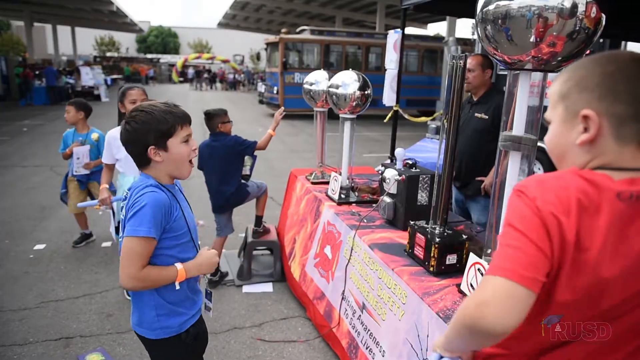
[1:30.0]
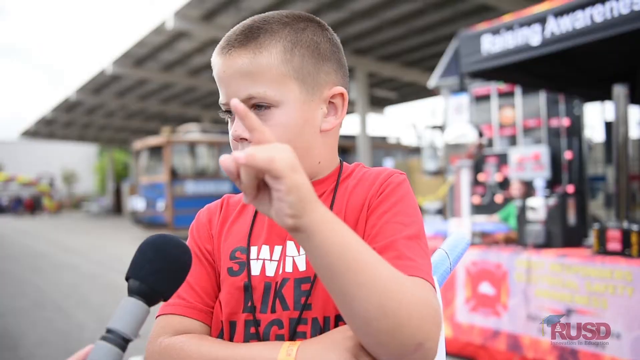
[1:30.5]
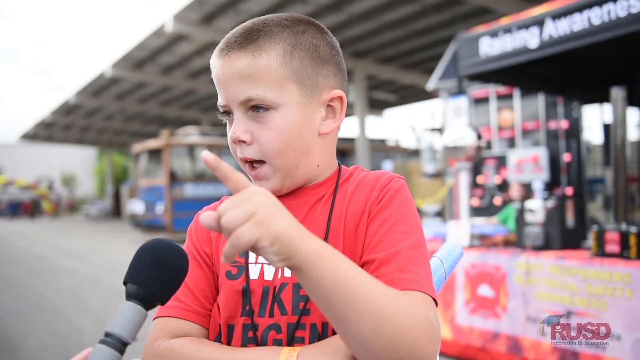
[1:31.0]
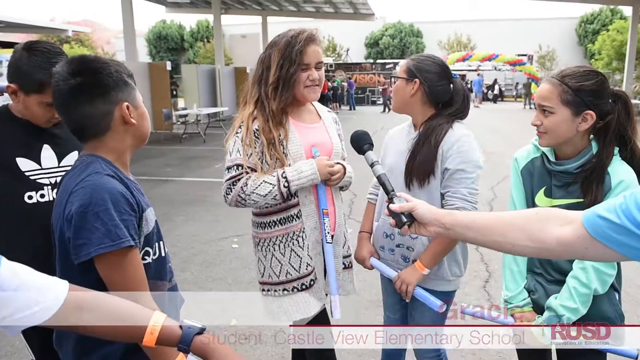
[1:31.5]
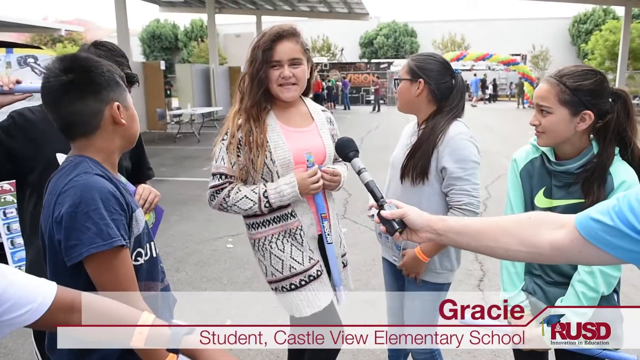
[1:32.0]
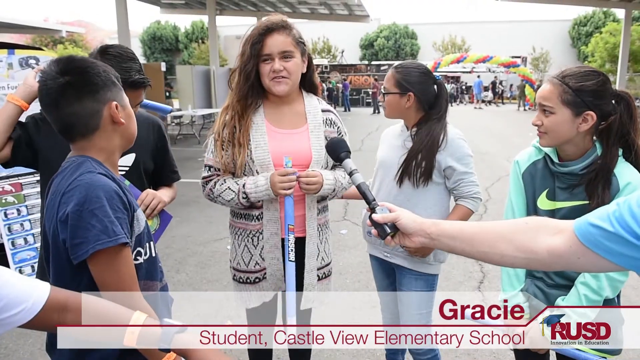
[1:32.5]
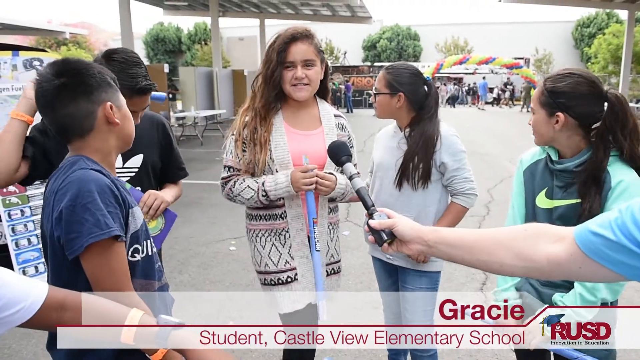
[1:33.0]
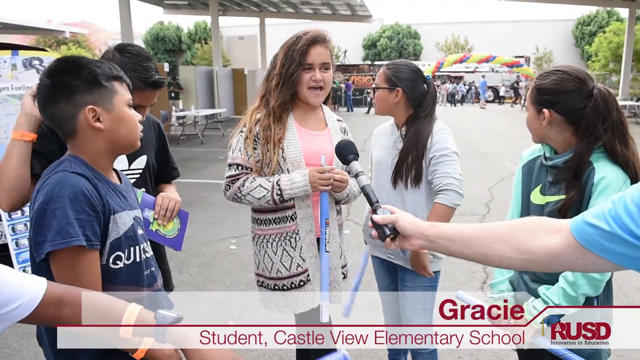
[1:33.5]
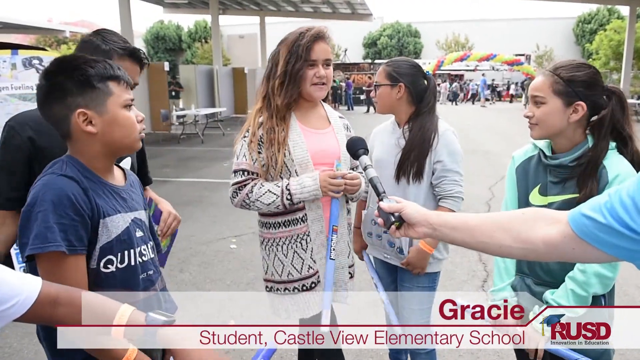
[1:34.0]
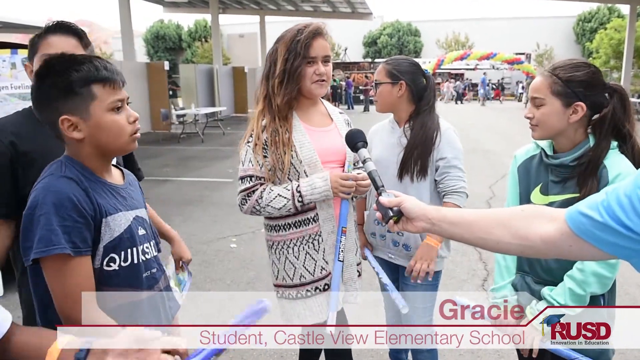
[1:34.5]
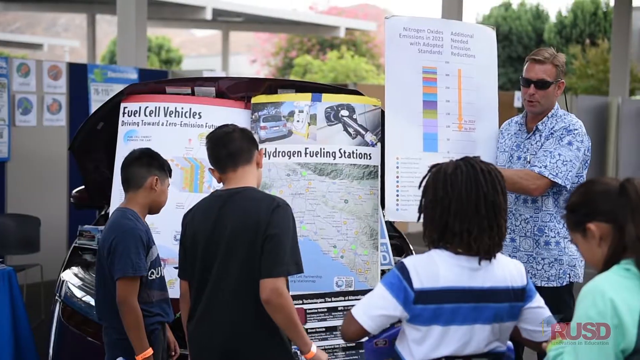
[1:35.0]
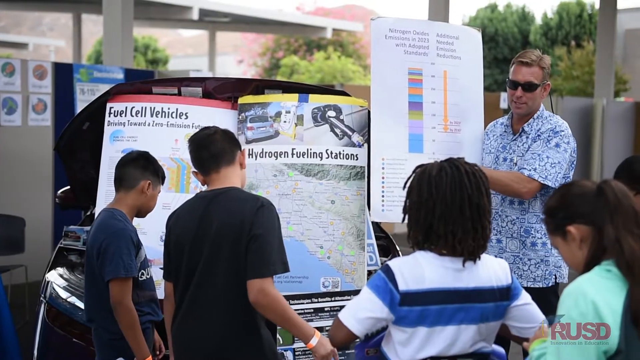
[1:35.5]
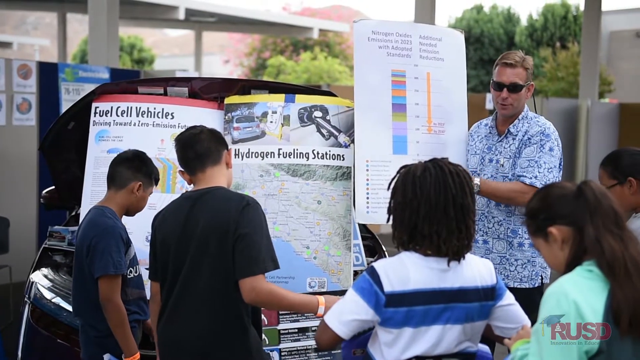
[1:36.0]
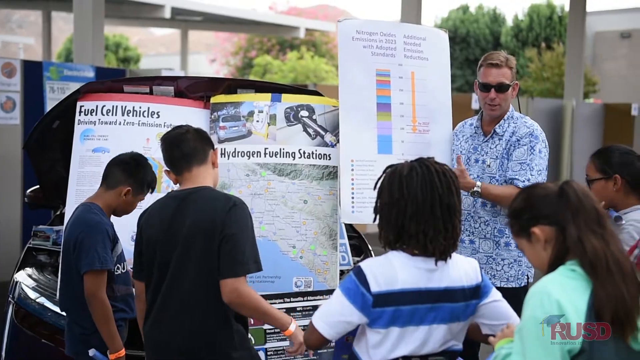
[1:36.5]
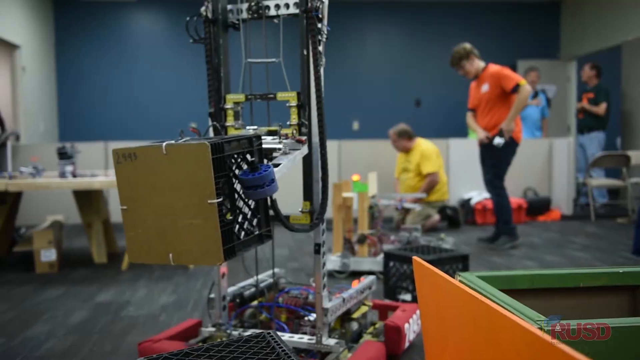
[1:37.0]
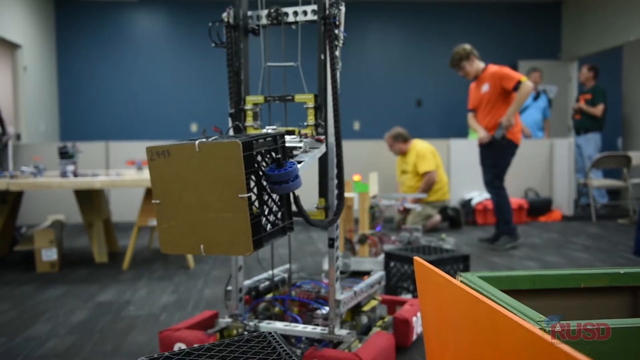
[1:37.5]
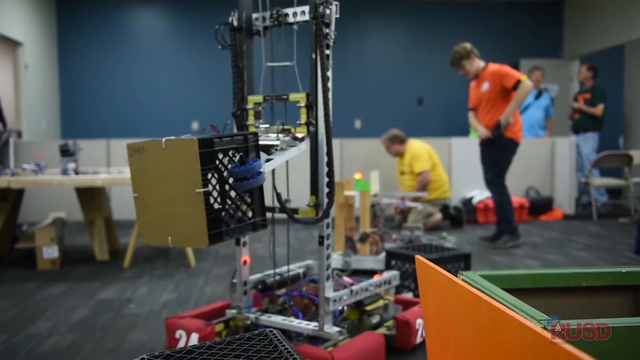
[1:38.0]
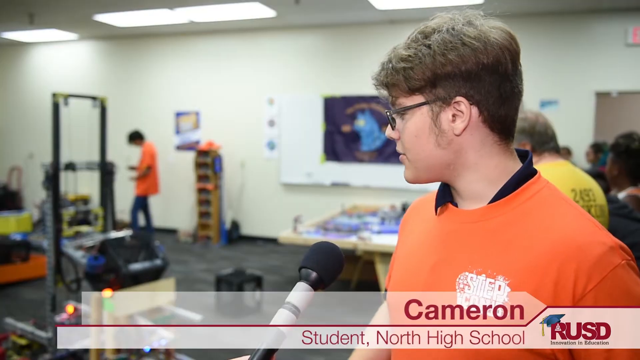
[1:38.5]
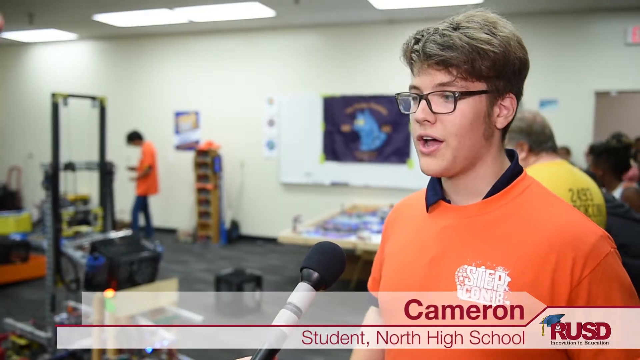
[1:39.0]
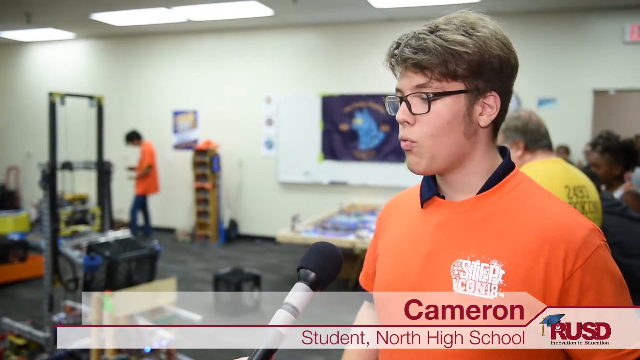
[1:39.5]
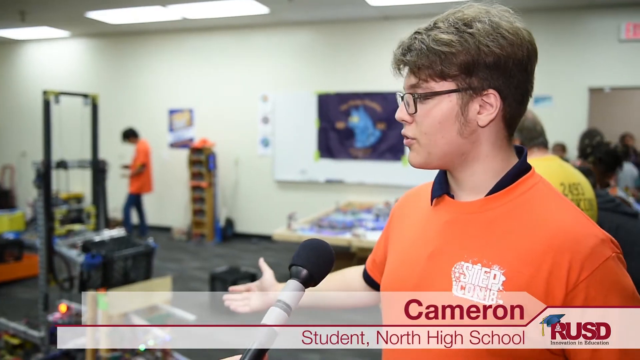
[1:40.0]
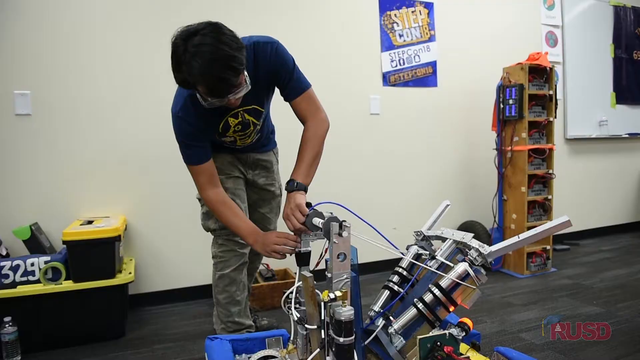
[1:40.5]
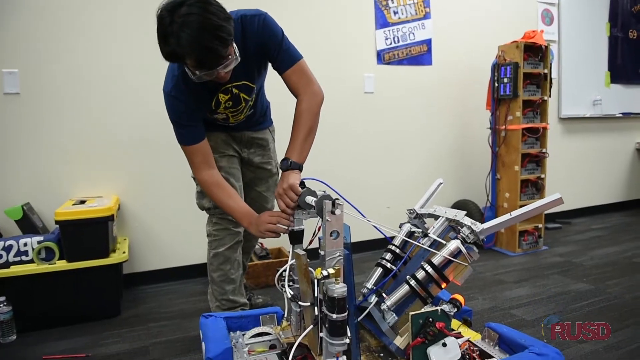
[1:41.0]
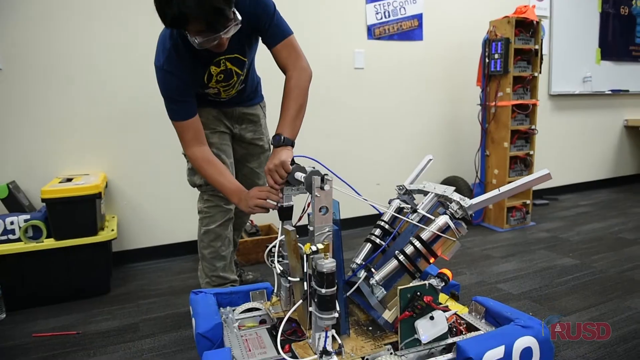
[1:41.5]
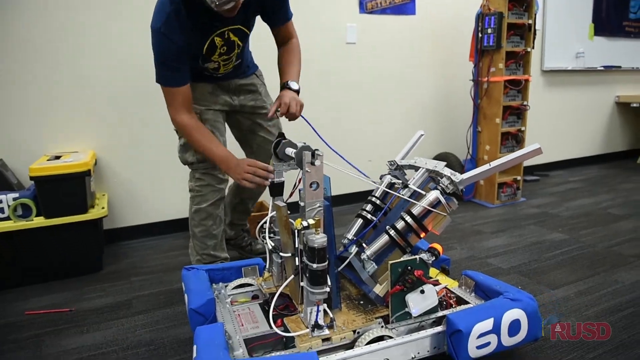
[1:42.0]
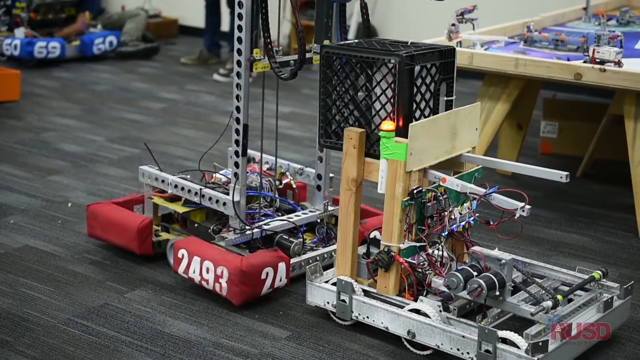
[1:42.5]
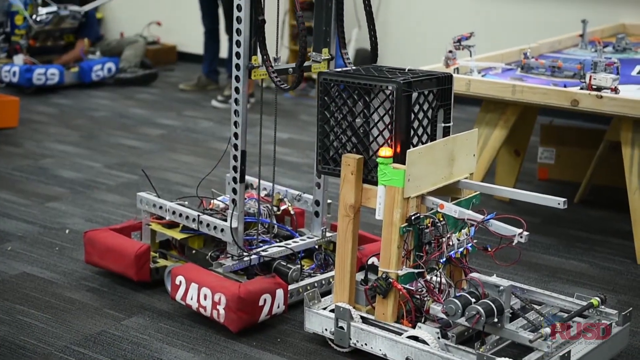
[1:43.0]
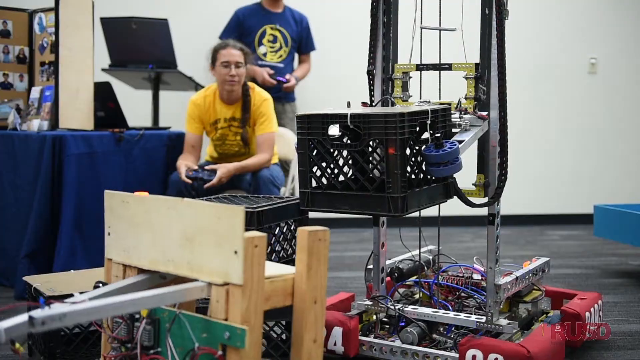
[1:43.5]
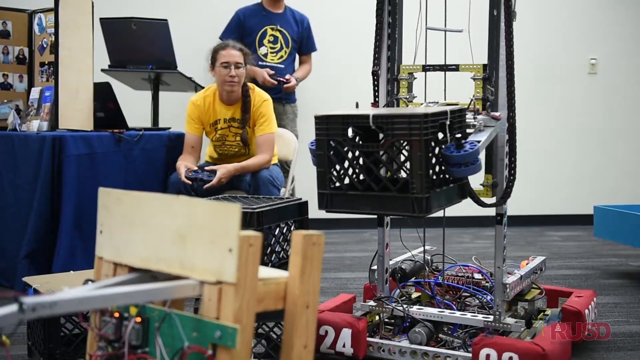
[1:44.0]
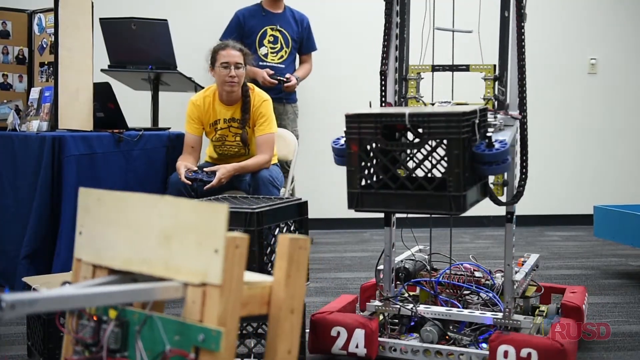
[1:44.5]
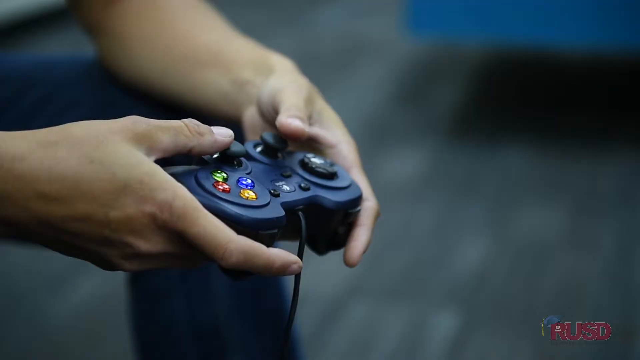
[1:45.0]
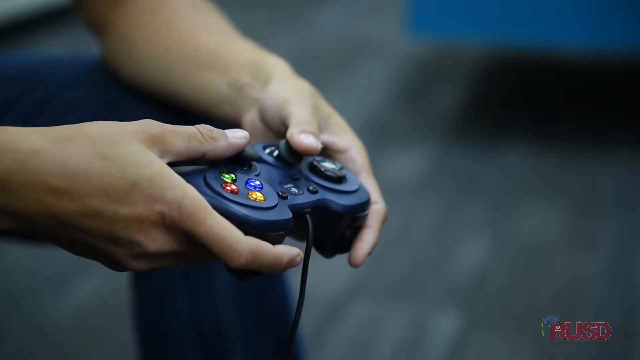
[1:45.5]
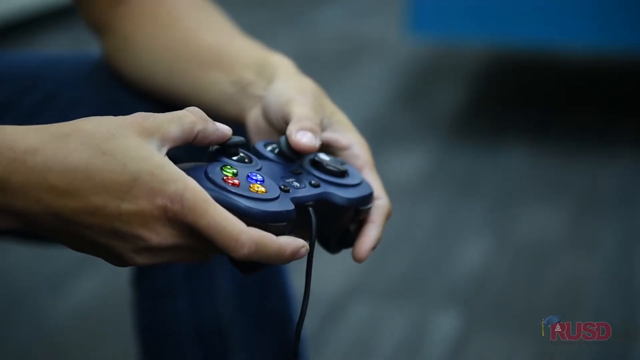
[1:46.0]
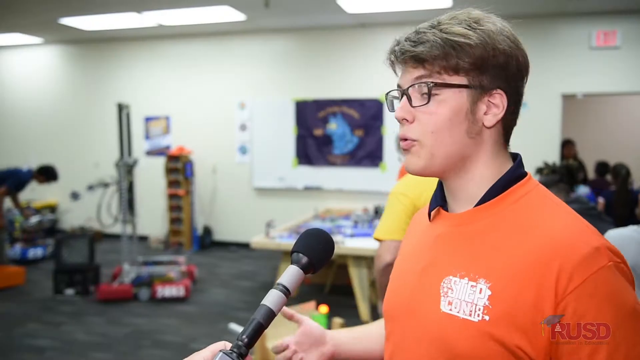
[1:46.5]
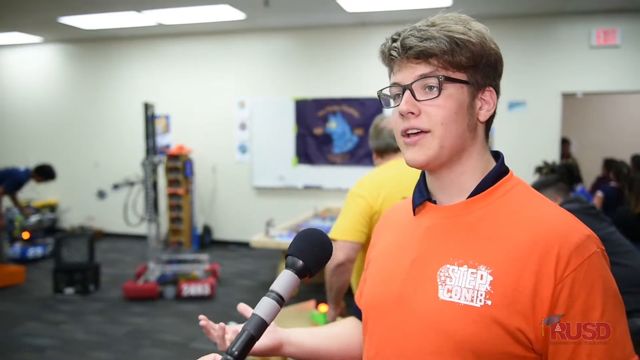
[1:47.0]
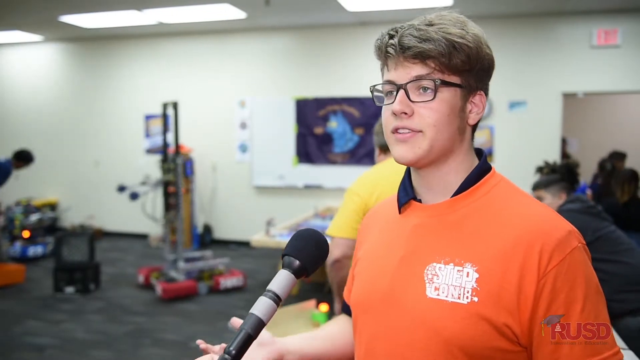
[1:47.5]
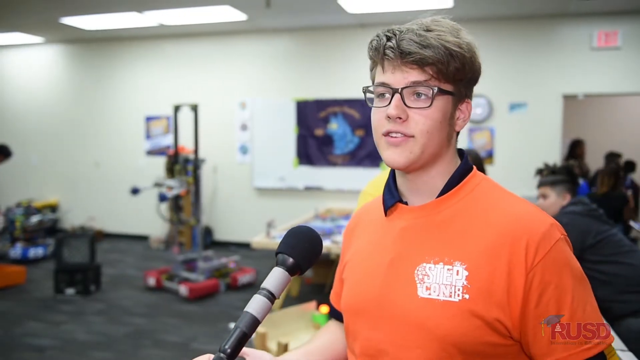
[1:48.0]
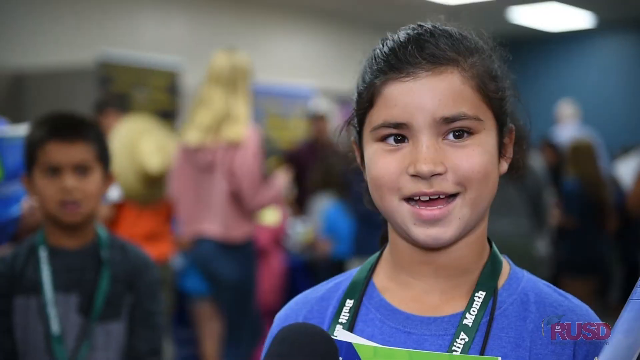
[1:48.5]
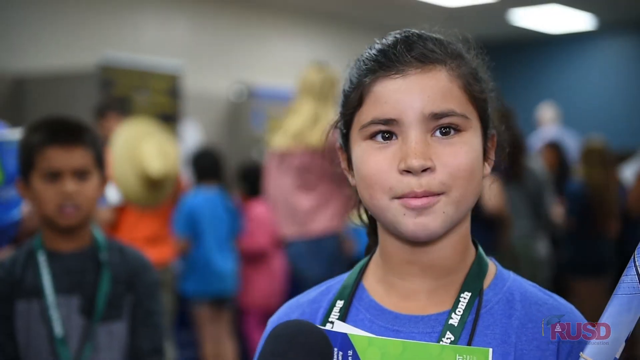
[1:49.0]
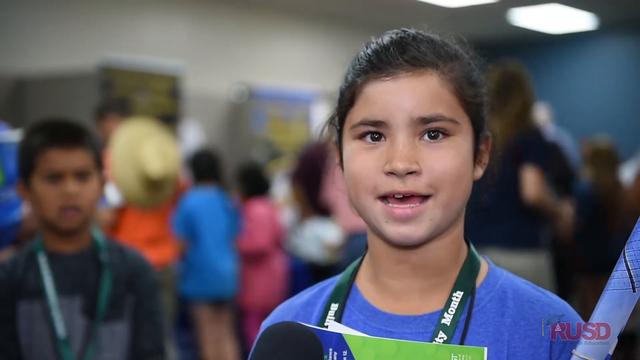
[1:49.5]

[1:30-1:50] Children stand around booths playing with static electricity. Some kids stand around talking to their friends while a reporter has a microphone. A girl named Gracie talks. A man on site gives a demonstration of a few vehicles called SkyDragon fueling stations, apparently some type of electric vehicle, and many kids gather around, seeming very interested. Next are robots and a kid named Cameron, who is very tall and has glasses and sideburns, talking about the robots and how they function. The robots appear to be lifting and doing heavy manual labor. Everyone seems to be having fun and taking serious interest in the experiments at the booths, which are all interactive in some way, and the kids are very excited to be there.